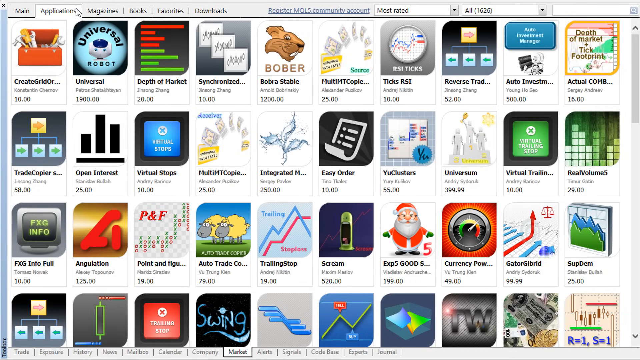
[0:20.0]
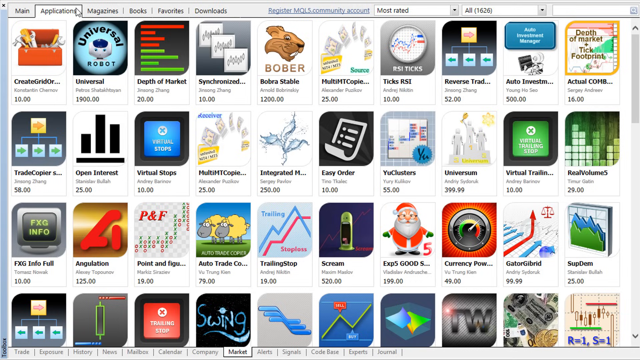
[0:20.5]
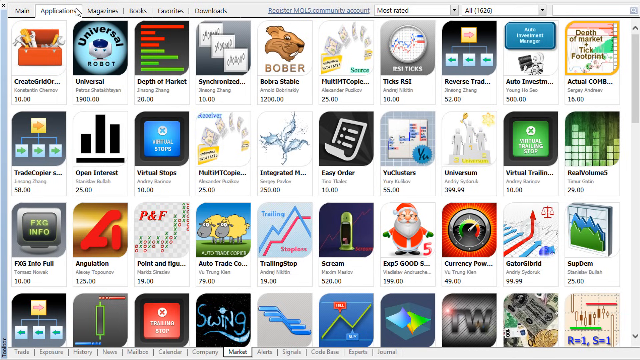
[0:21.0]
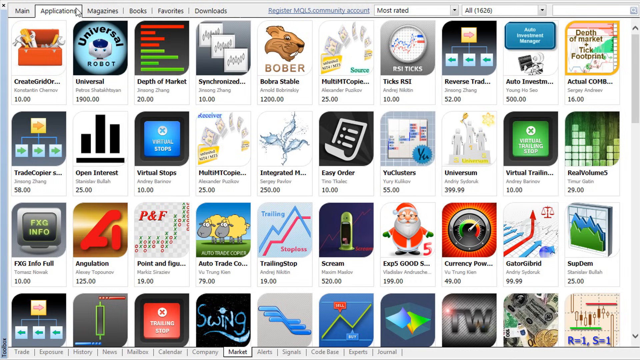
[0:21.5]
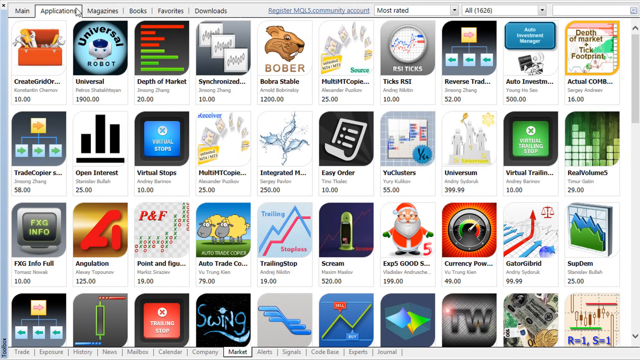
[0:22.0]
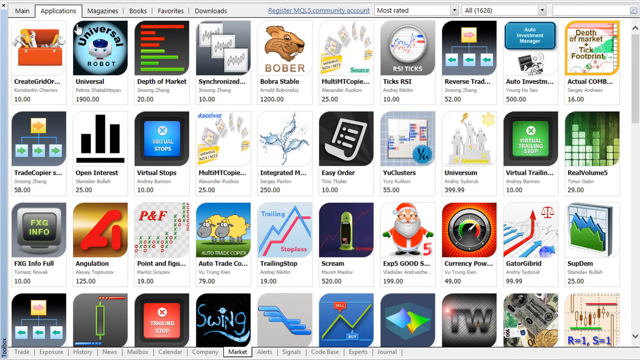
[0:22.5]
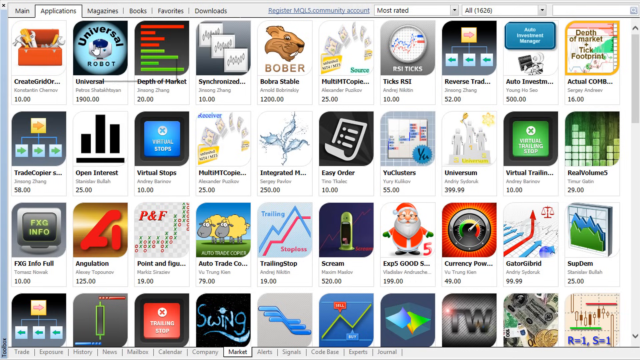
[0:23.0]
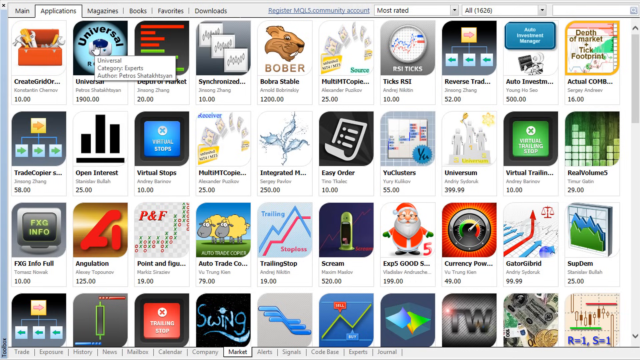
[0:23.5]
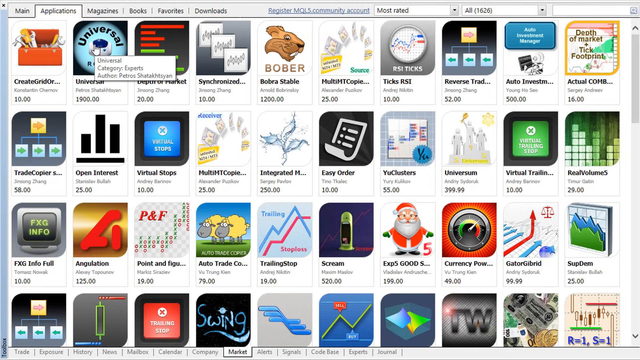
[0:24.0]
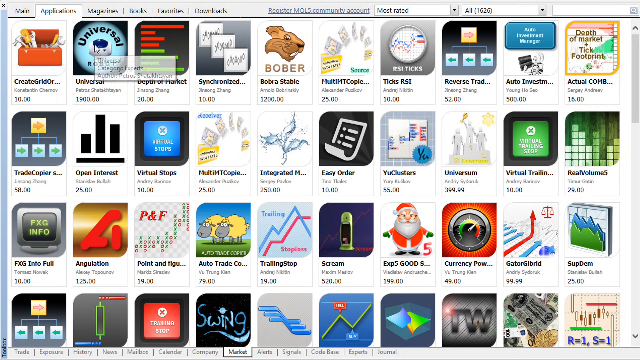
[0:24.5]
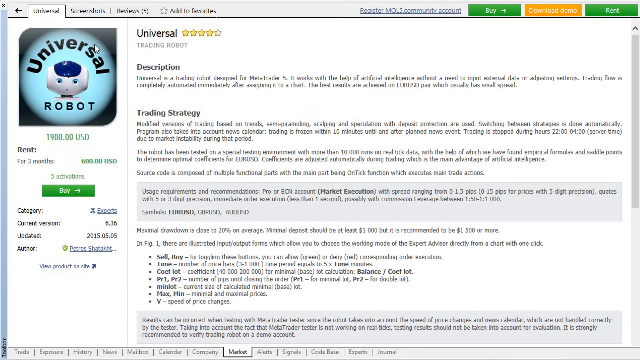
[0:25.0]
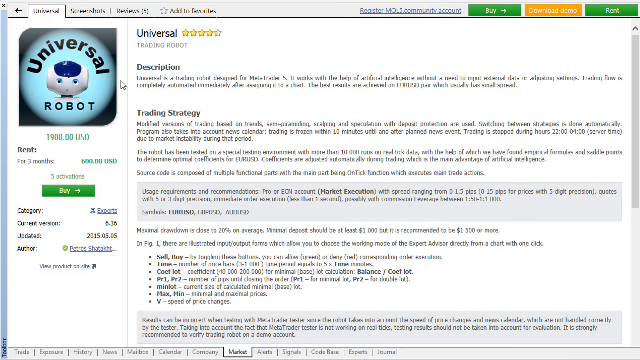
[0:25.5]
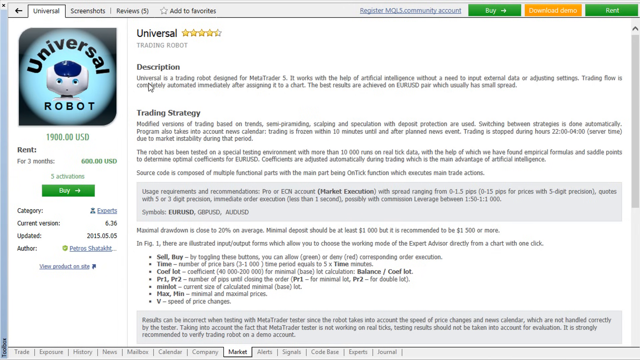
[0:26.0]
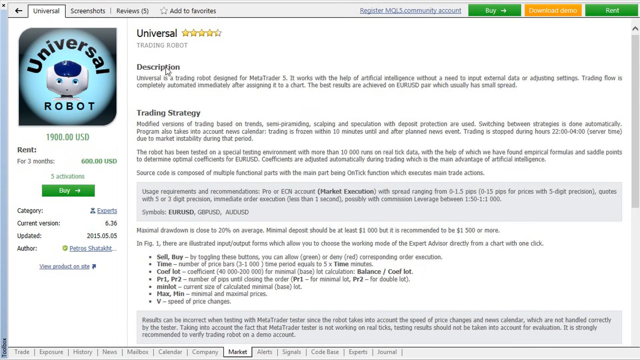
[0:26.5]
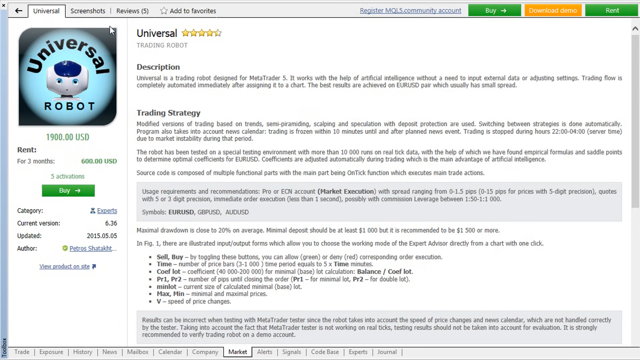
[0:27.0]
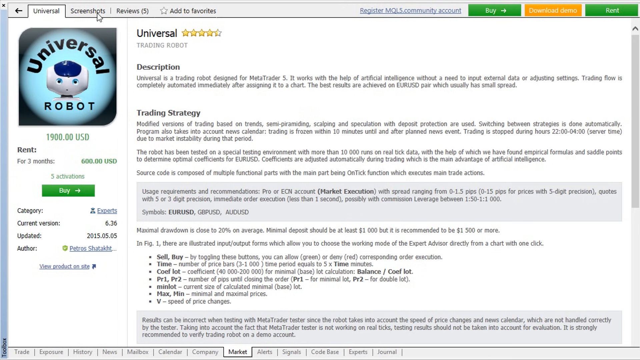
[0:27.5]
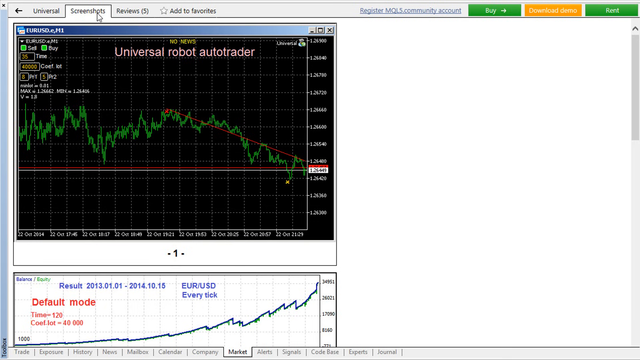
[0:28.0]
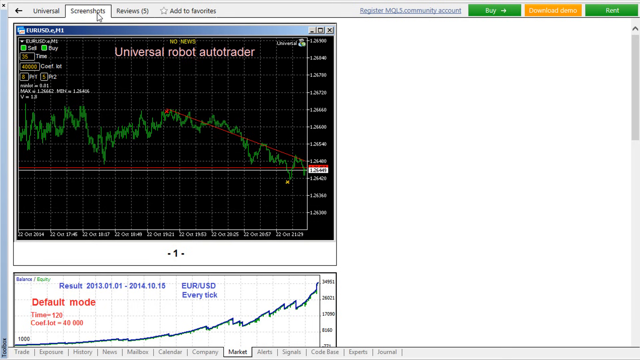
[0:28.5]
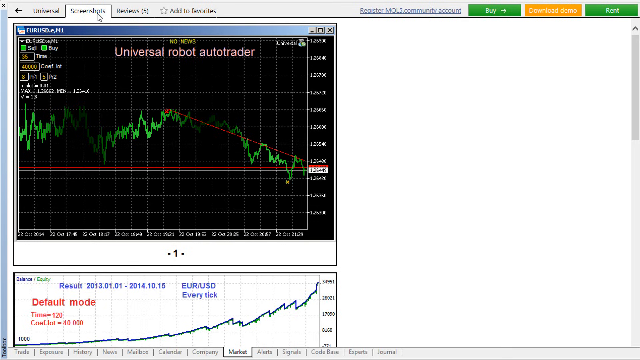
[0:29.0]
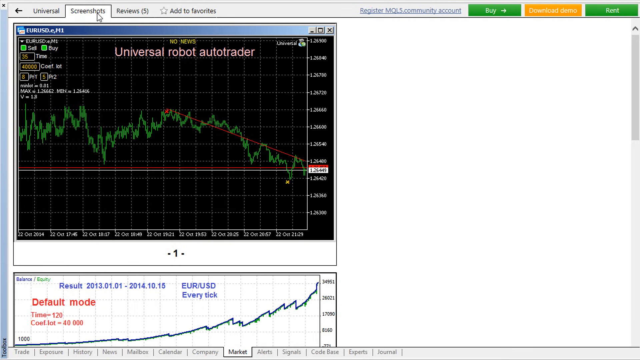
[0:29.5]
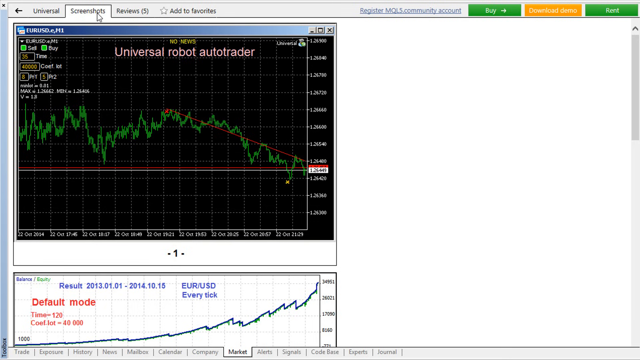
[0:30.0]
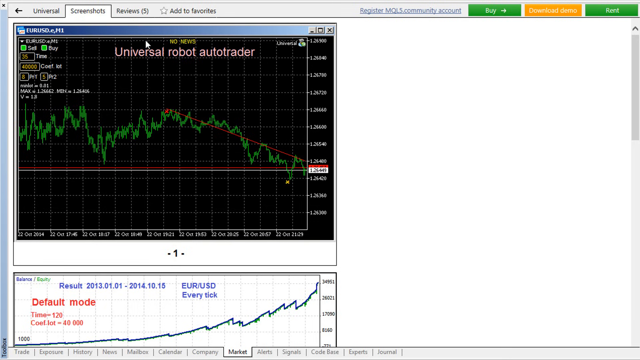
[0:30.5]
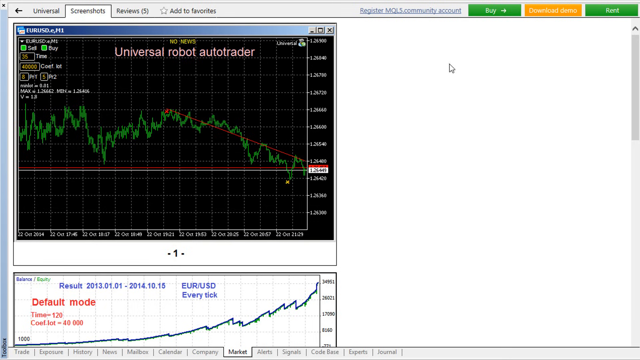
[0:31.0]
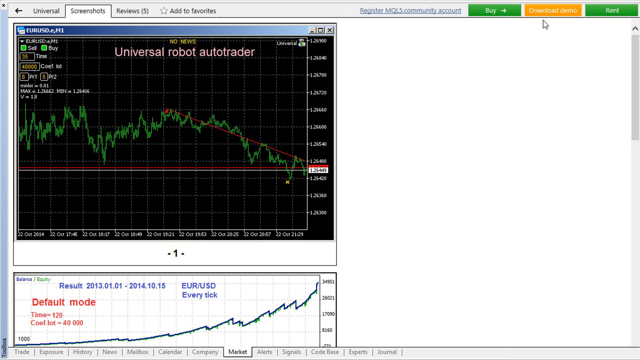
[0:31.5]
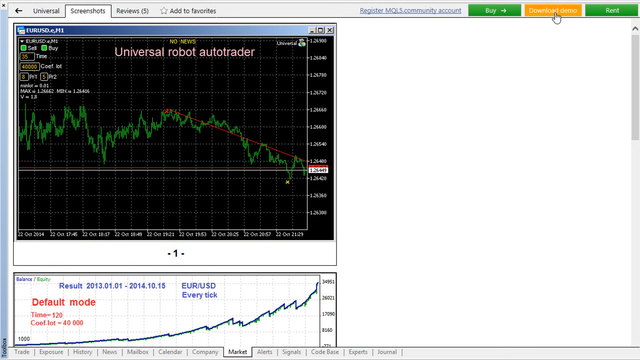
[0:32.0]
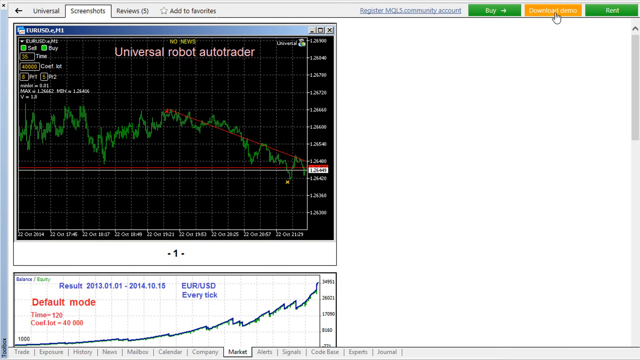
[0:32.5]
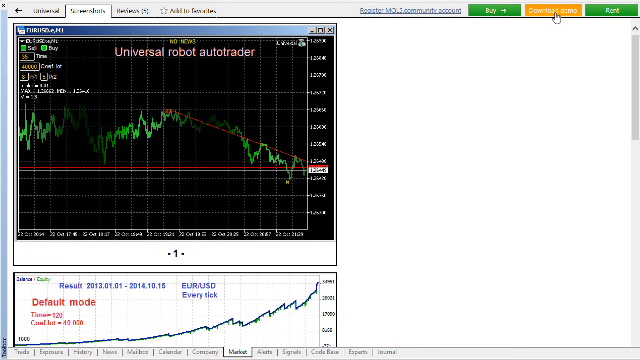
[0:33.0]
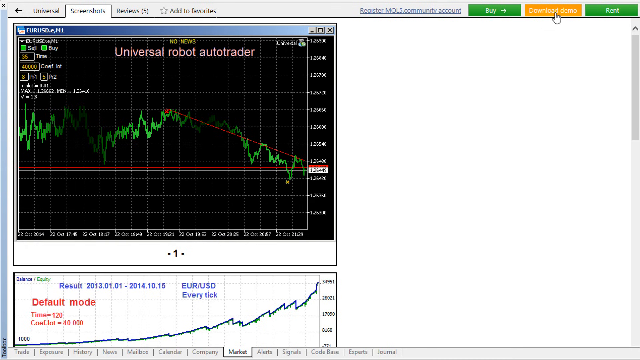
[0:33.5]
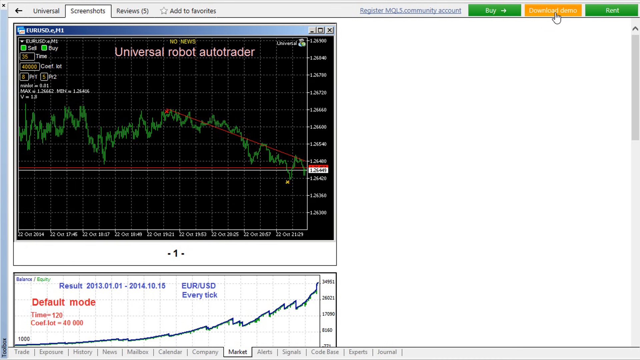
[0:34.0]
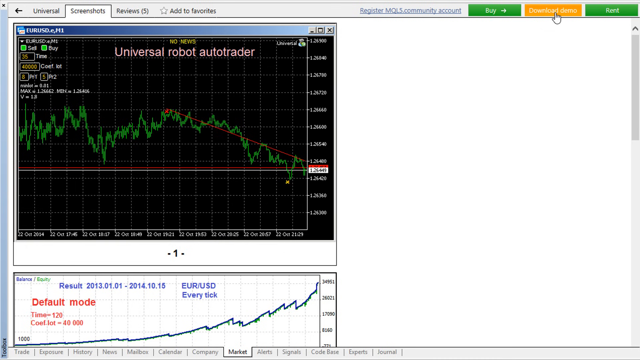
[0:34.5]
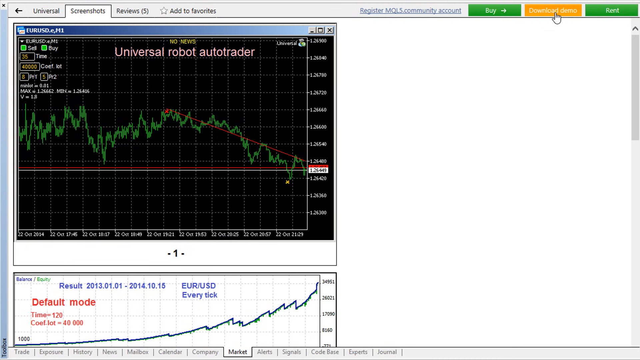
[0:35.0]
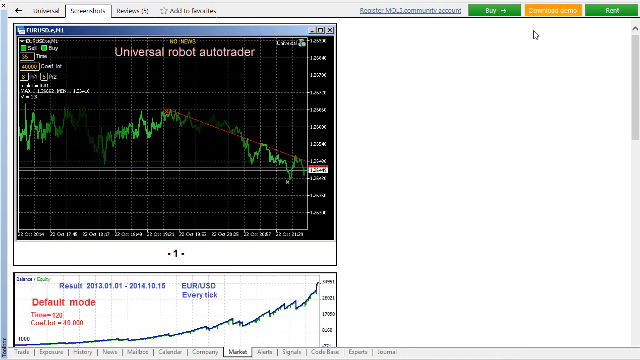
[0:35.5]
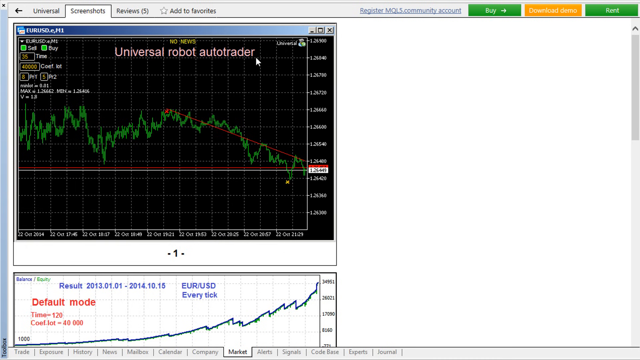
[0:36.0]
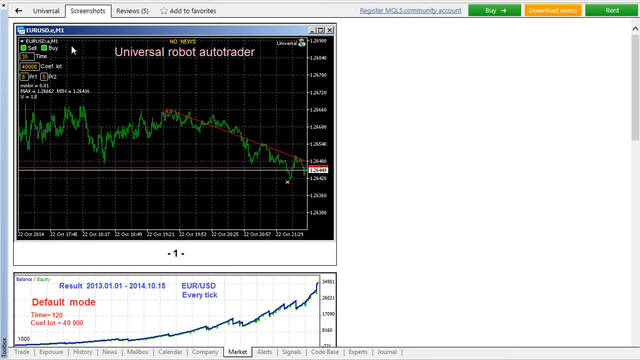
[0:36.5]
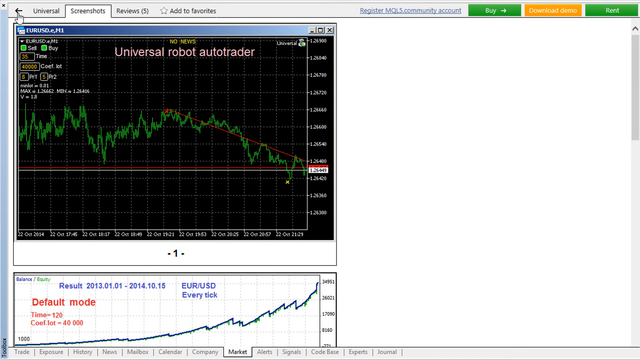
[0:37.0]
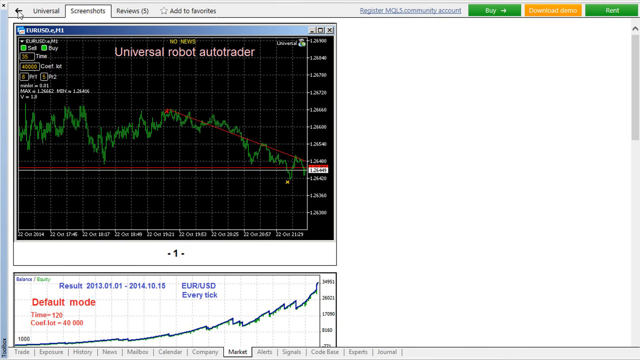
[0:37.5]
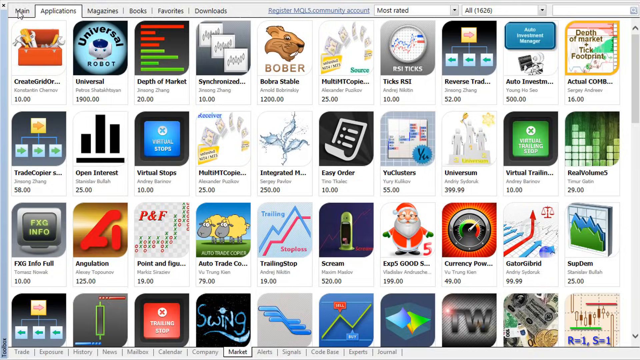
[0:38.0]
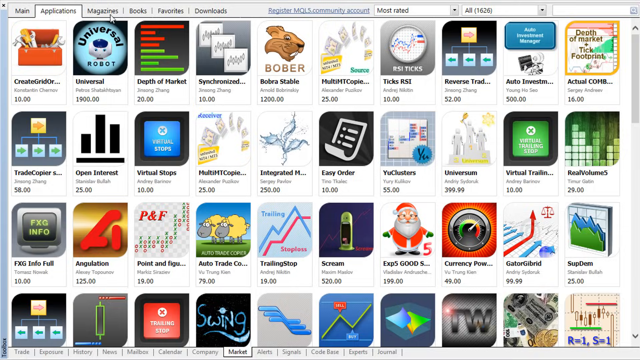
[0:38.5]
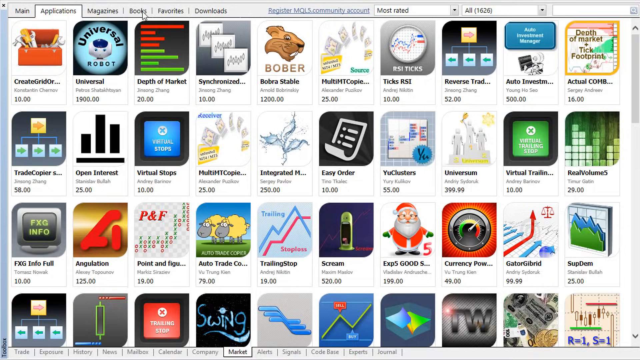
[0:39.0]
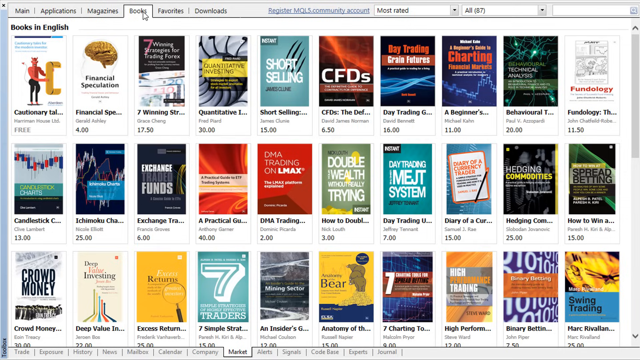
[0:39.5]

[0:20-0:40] A total of 20 different applications are available to choose from. An application called Universal Robot is selected; it shows a description, the trading style, a rating of 4.5 stars, and a price of $600 for 3 months. A Screenshots tab at the top is clicked, opening a page that shows a graph of a stock; the application is a bot autotrader meant to help trade stock. The mouse cursor moves over to a button called Download Demo, then to a Back button, which is clicked. Next, a tab called Books is clicked, and 40 different books appear to choose from.